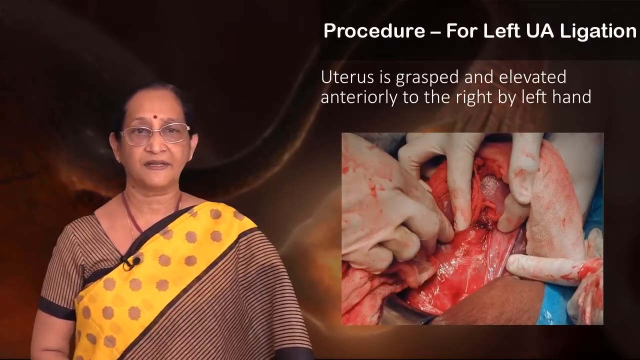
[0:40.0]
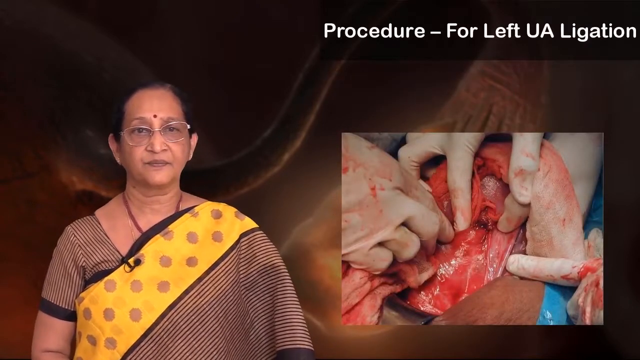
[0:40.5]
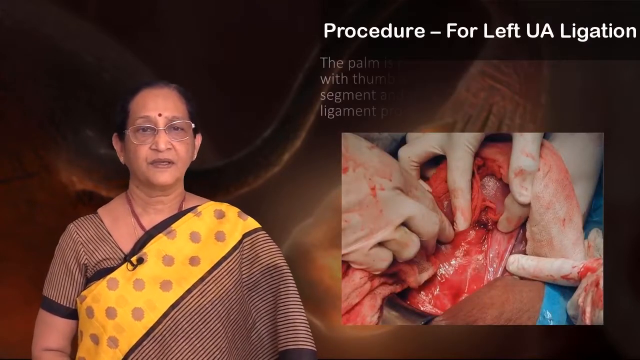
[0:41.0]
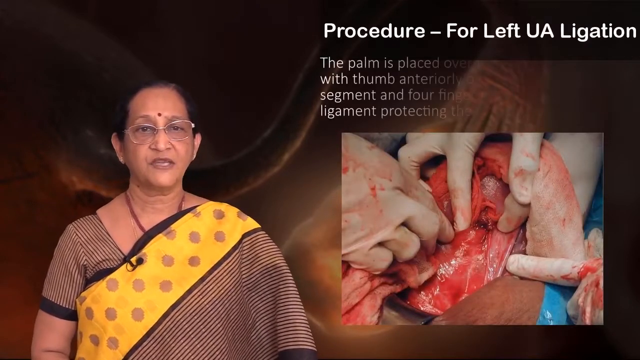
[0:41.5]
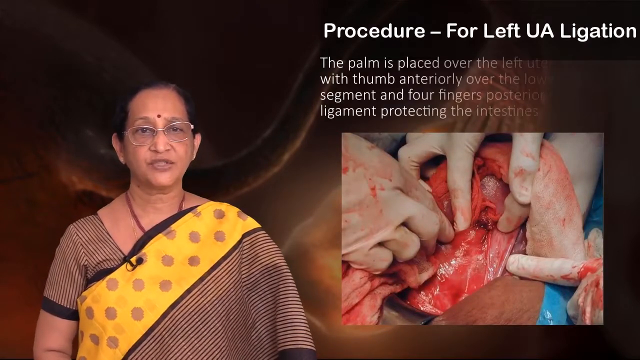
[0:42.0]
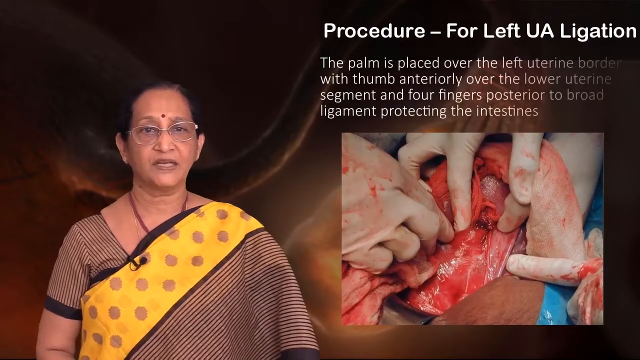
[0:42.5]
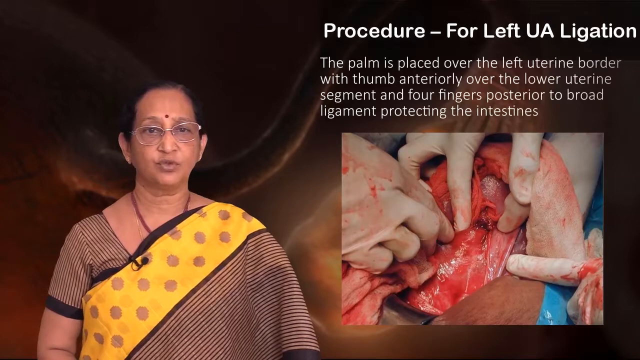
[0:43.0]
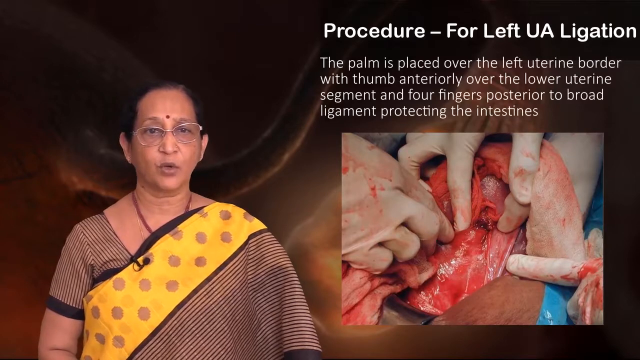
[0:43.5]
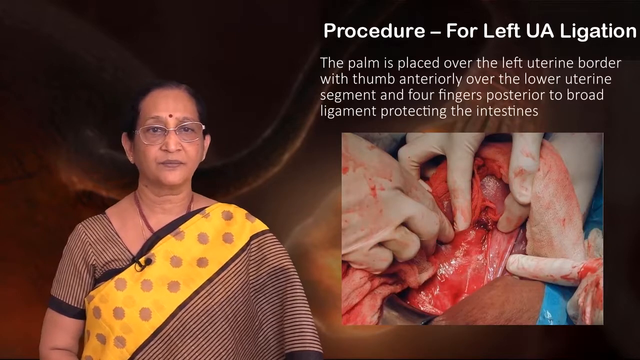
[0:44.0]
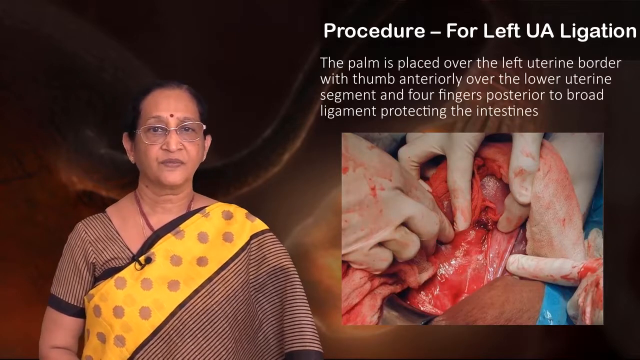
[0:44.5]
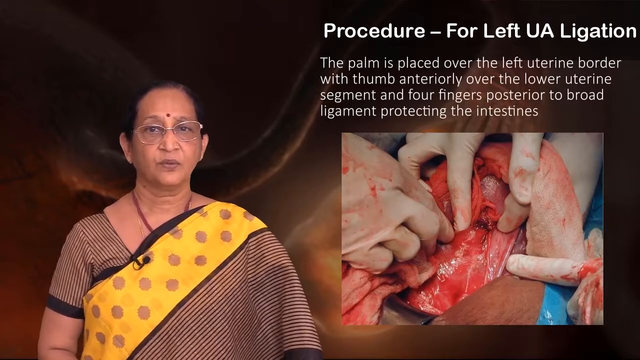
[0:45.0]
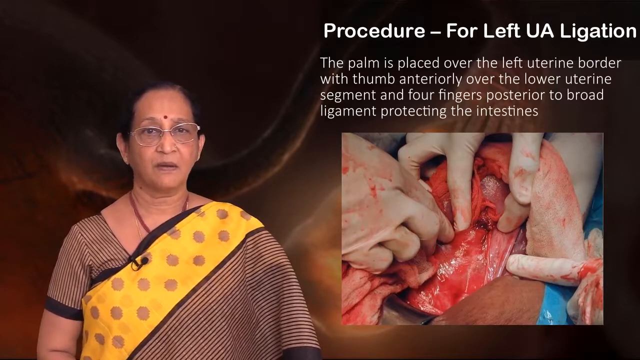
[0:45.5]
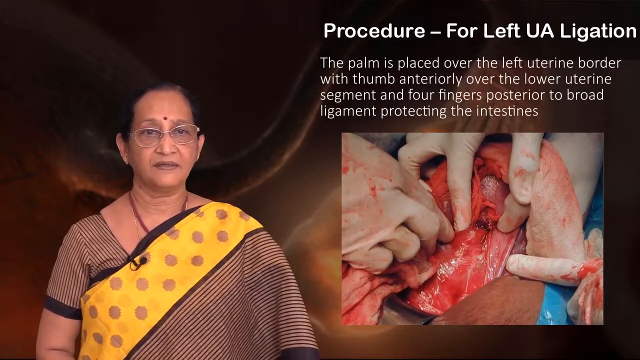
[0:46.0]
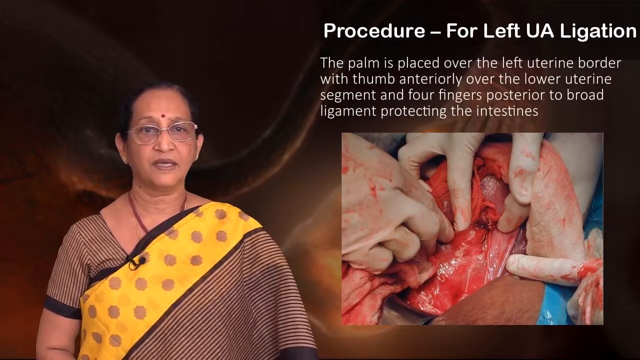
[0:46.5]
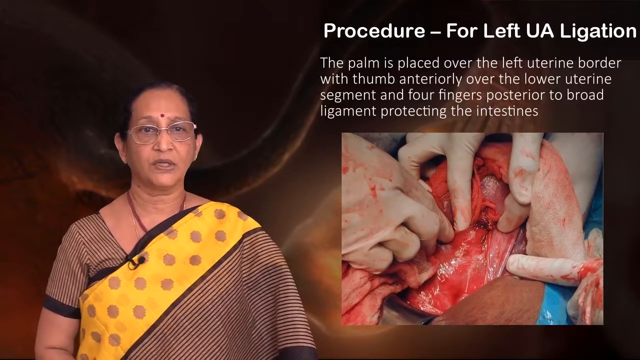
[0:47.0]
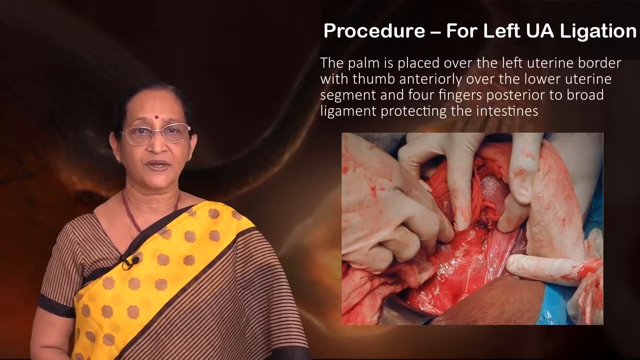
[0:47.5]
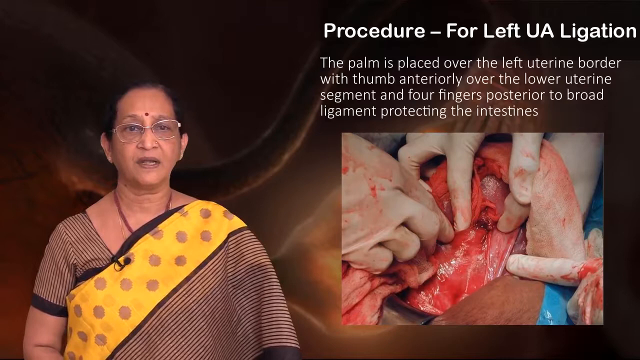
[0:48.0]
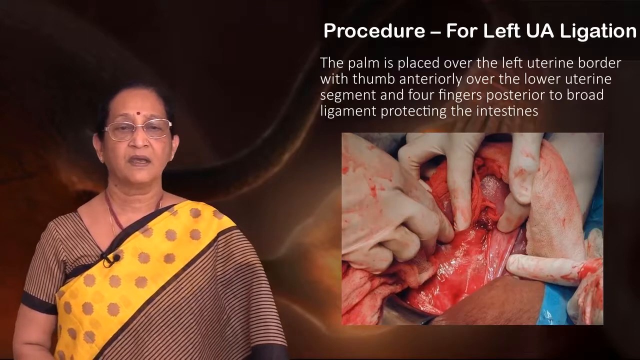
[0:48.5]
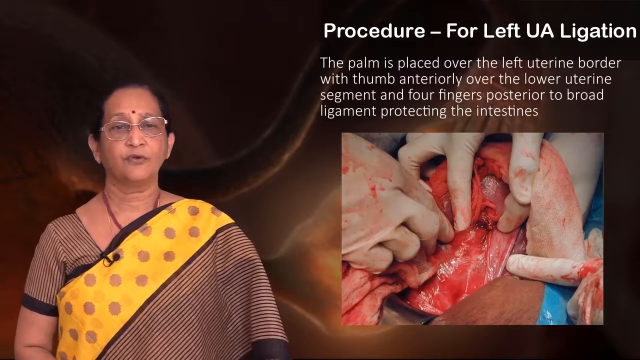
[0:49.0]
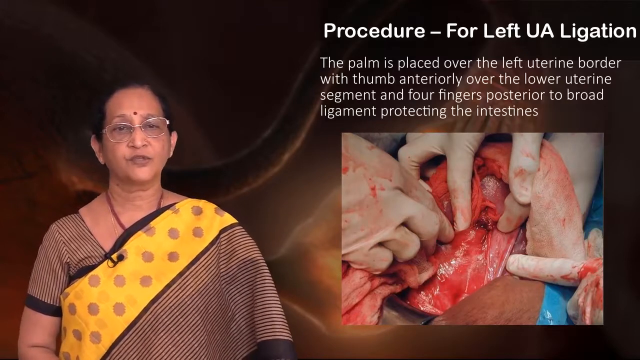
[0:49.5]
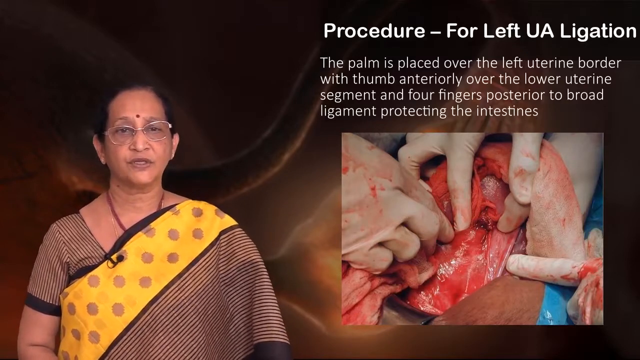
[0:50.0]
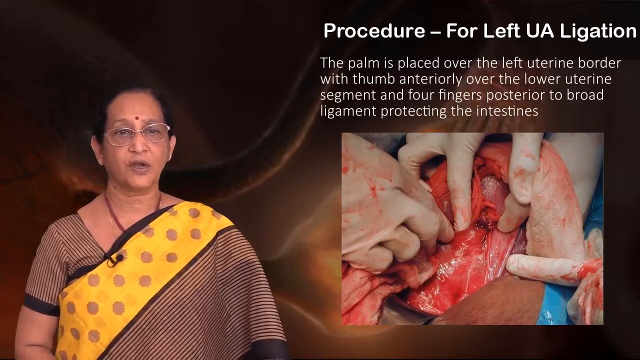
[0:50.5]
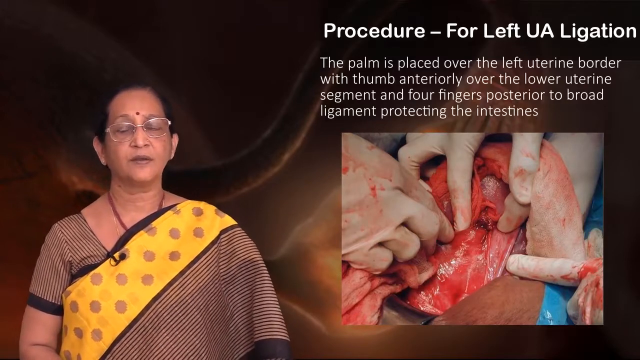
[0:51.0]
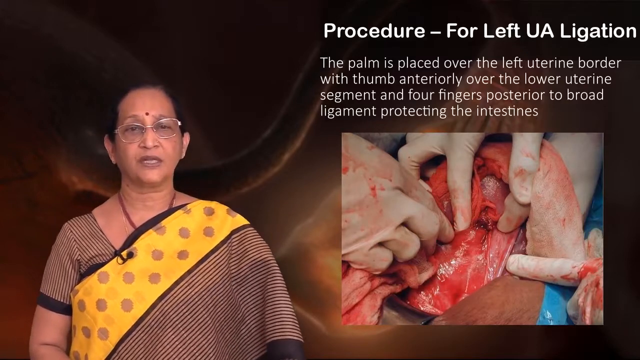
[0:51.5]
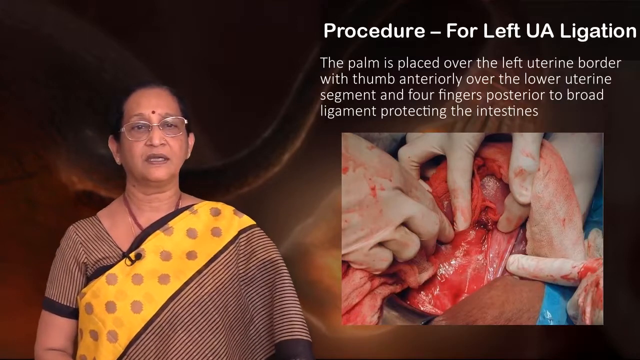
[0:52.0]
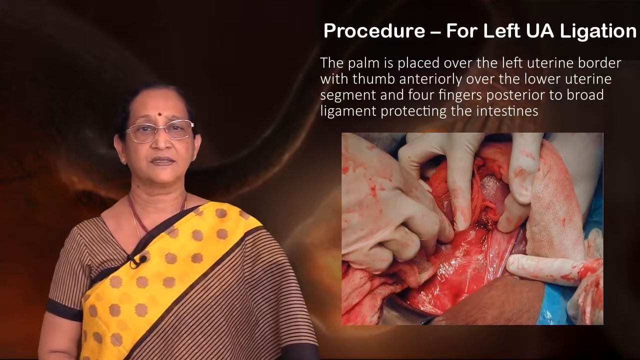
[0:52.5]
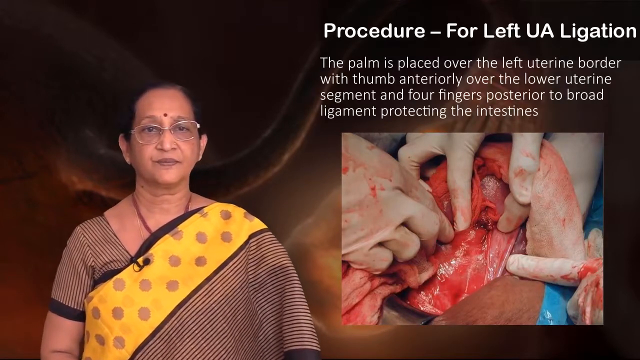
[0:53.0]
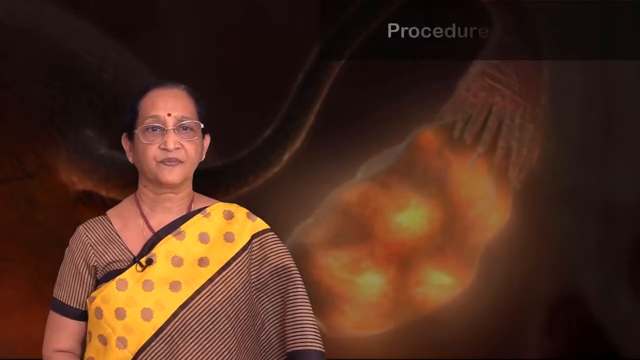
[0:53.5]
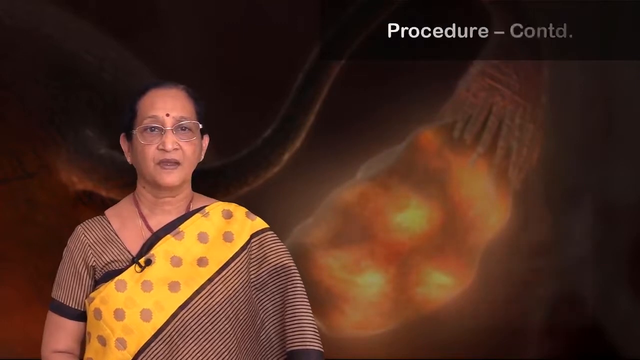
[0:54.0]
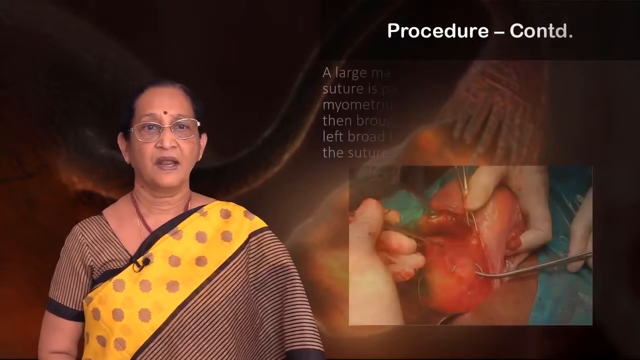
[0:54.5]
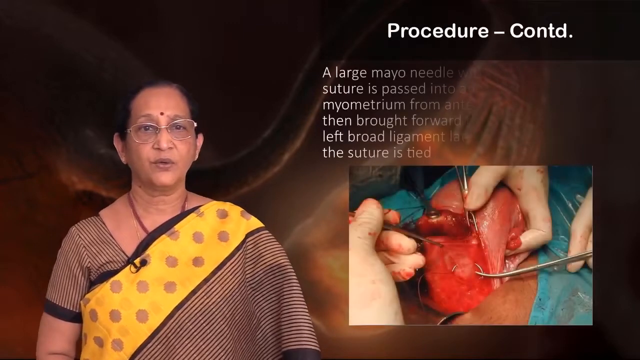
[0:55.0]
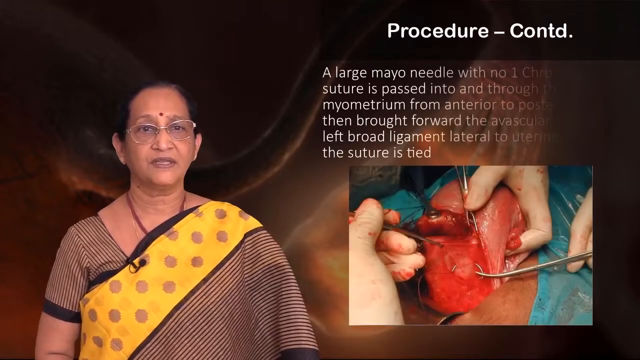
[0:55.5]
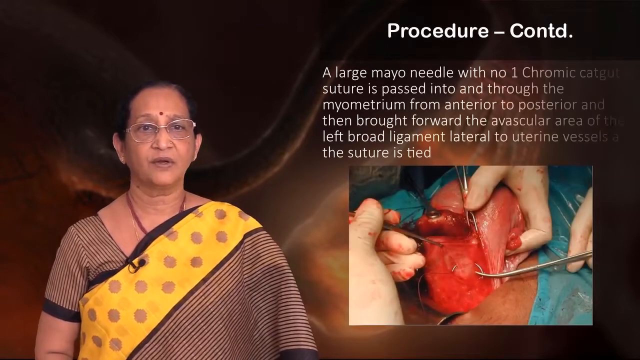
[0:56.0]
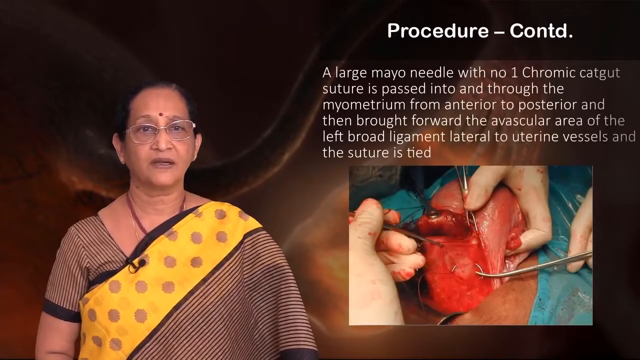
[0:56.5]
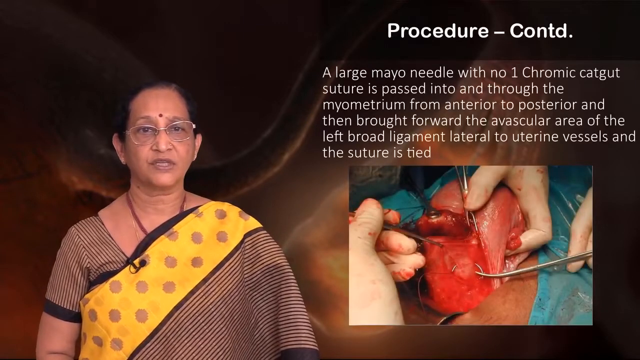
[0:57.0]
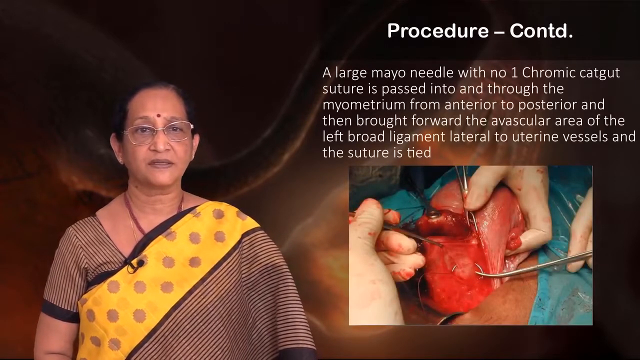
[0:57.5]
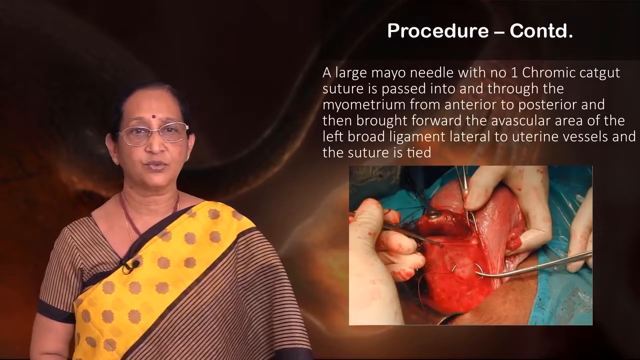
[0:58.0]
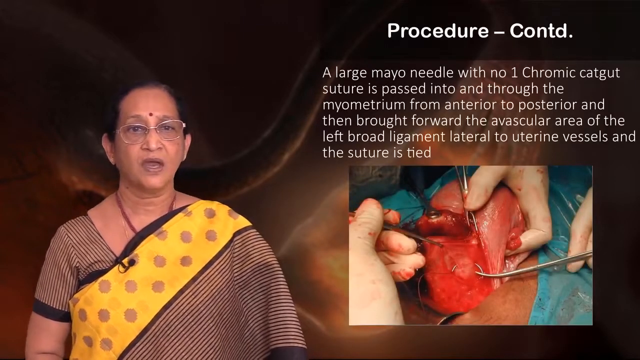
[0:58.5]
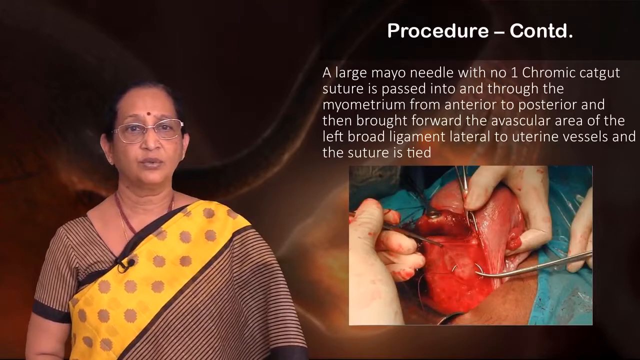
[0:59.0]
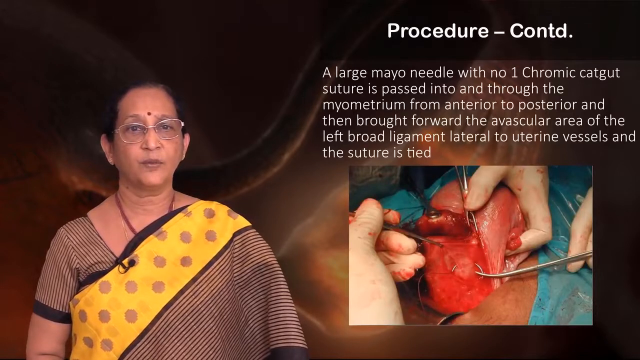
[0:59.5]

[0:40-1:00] The woman is on the left side of the screen, shown from the chest up. More text fades in on the right, above the picture of hands in white medical gloves reaching into the inside of somebody in a very close-up view. The text reads "the palm is placed over the left uterine border with thumb interiorly over the lower uterine segment and four fingers posterior to broad ligament protecting the intestines." She continues to speak. The top-right title is then replaced with "procedure, CONTD", and another paragraph fades in about a large needle and suture, reading in part "is passed into and through the myometrium from anterior to posterior" and ending "lateral to uterine vessels and the suture is tied". Beneath it is another picture of white-gloved hands performing the procedure: three hands are visible, though of the third, rightmost hand only the index finger can be seen, and all are holding silver surgical tools. She continues to speak.